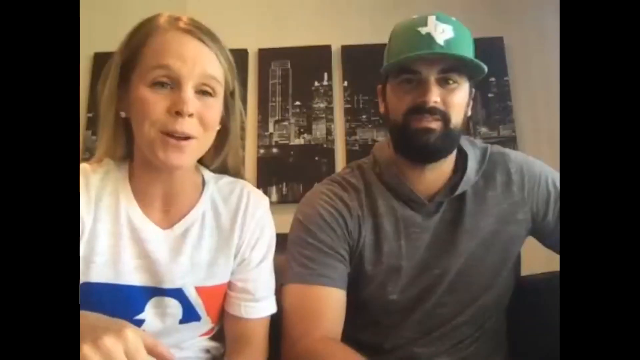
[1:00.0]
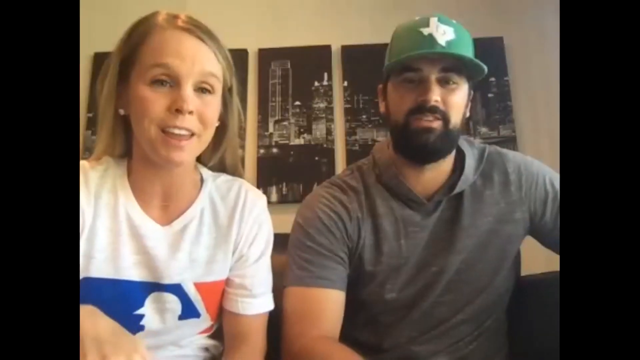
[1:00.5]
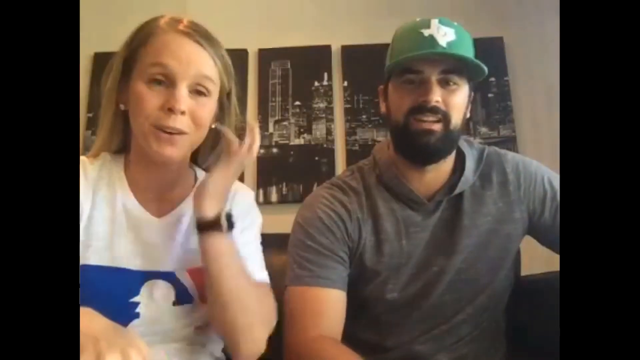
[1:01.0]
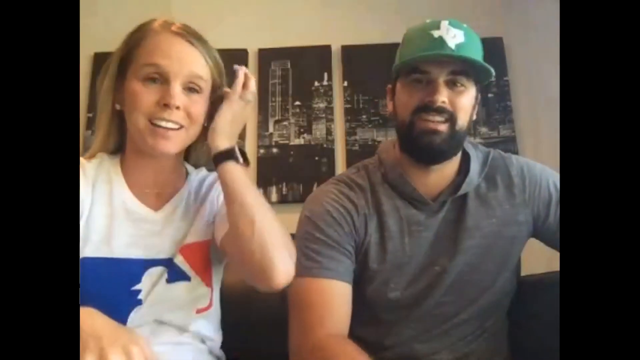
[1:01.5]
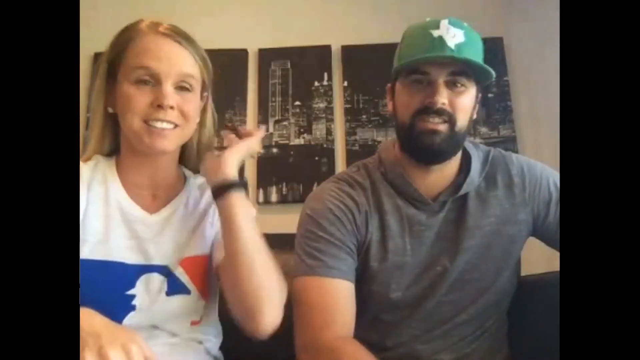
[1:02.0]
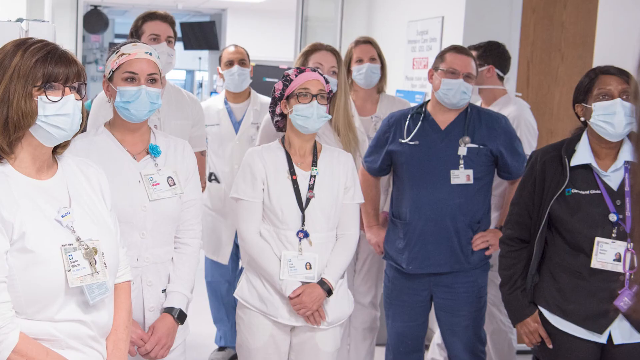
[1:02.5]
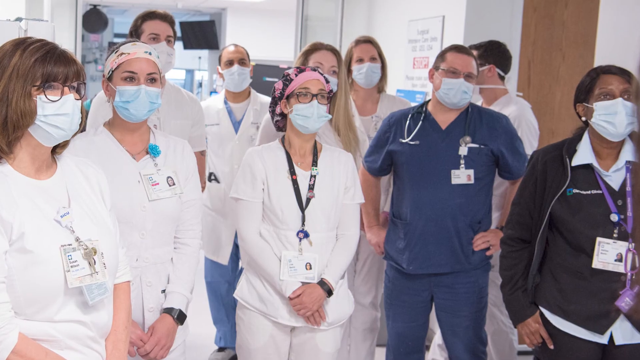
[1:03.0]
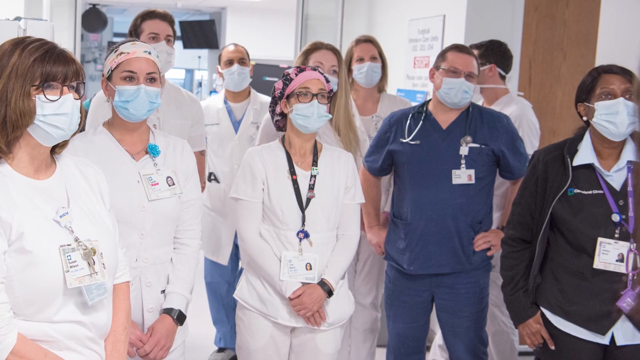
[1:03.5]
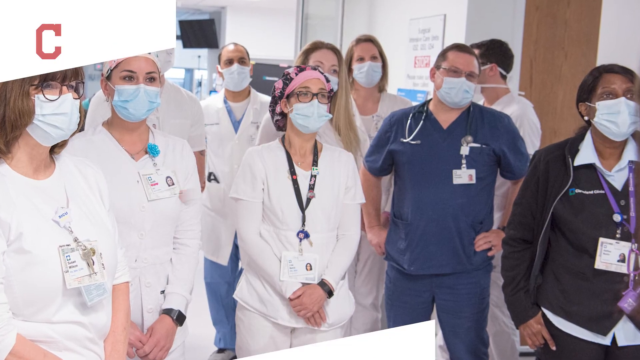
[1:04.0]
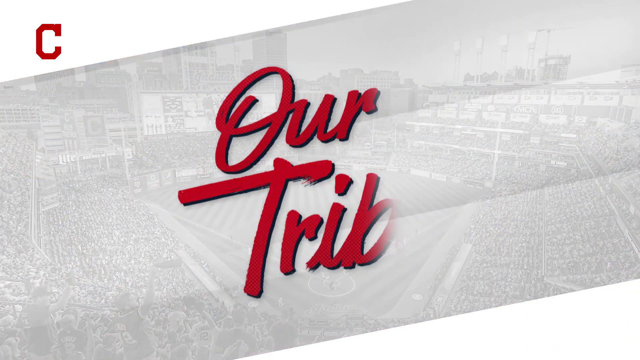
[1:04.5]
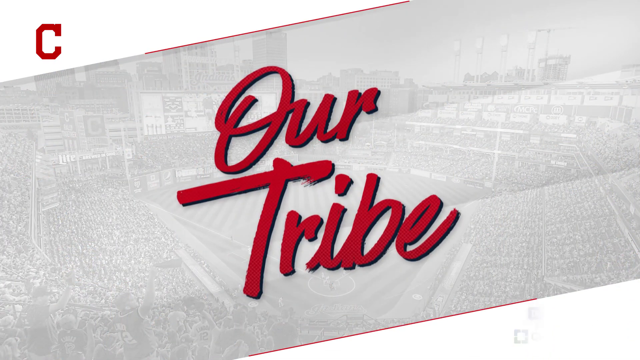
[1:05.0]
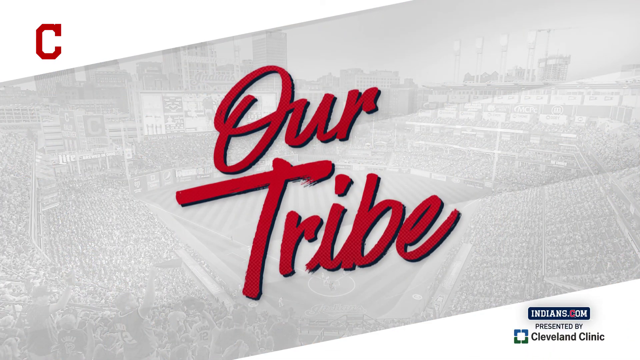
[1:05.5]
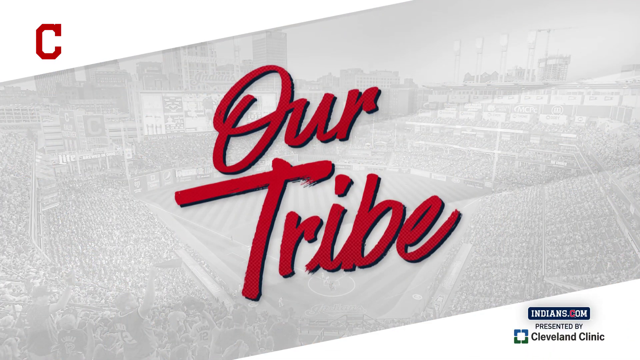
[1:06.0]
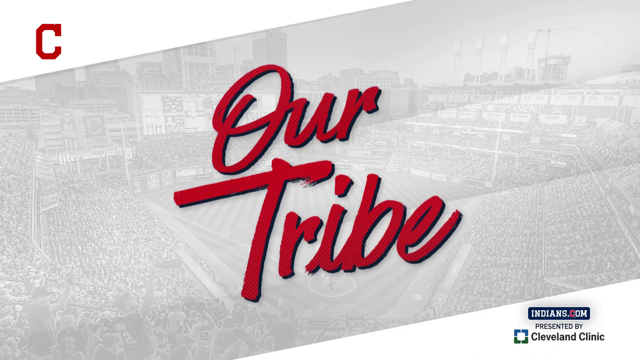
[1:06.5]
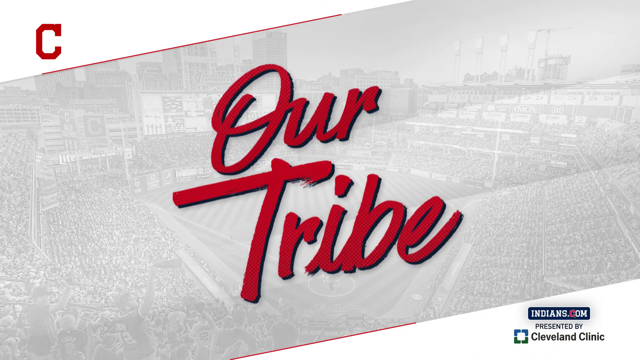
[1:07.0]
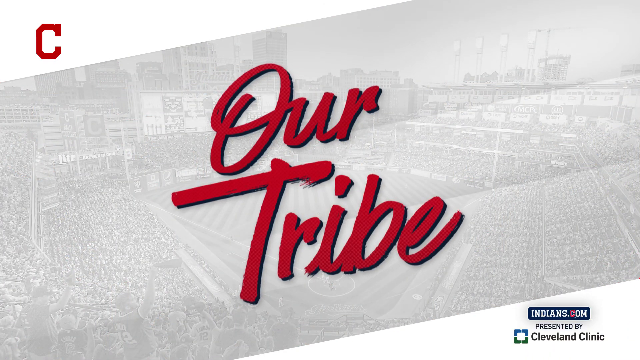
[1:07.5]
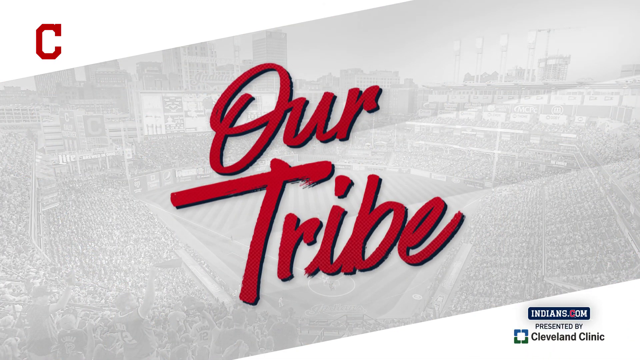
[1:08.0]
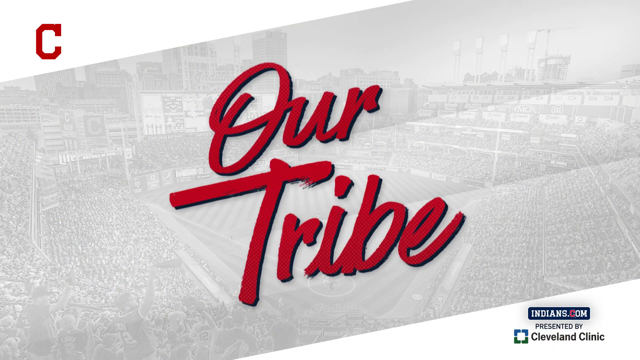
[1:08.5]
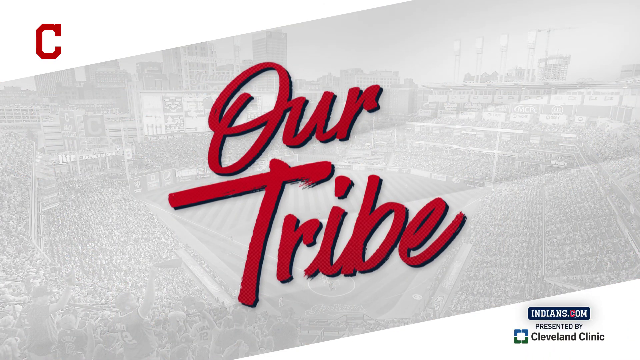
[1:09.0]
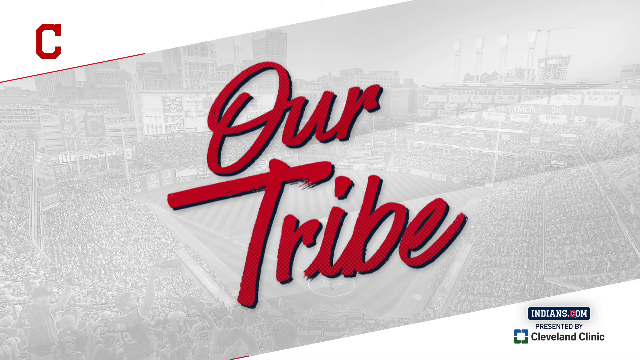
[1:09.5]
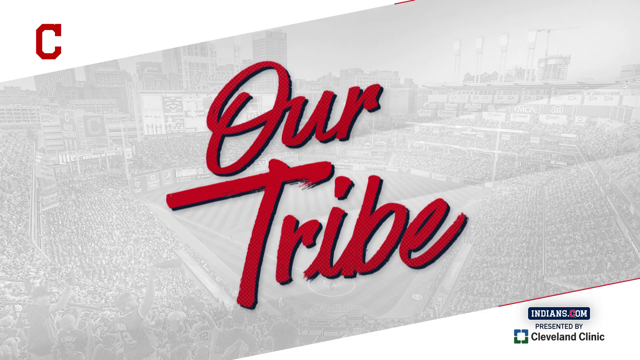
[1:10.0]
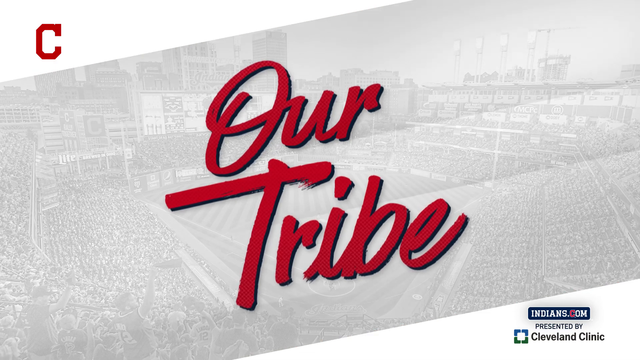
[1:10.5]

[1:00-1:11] Two people sit in front of the camera in a living room, with pictures of what appears to be a cityscape behind them, seemingly paintings. One is a man and one is a woman; the man sits on the right. He wears what looks like a short-sleeved gray shirt and a green hat with the state of Texas on it. The woman wears what appears to be a white shirt with the MLB logo on it. Both talk to the camera. Then an image shows doctors and nurses in scrubs, some white and some blue, all wearing face coverings and badges on their scrubs, in a hospital.